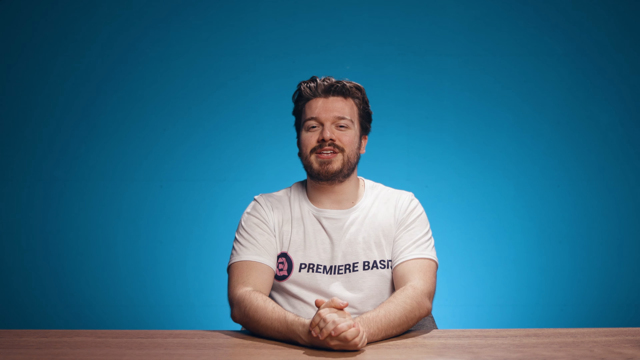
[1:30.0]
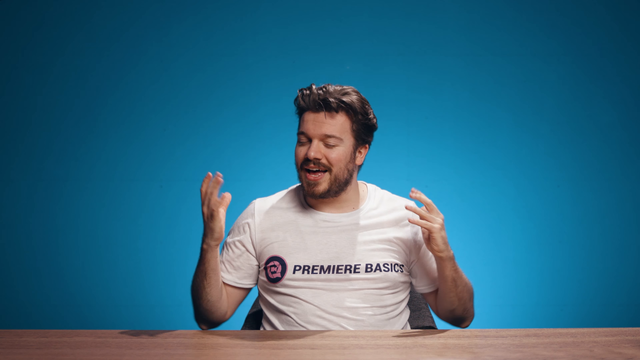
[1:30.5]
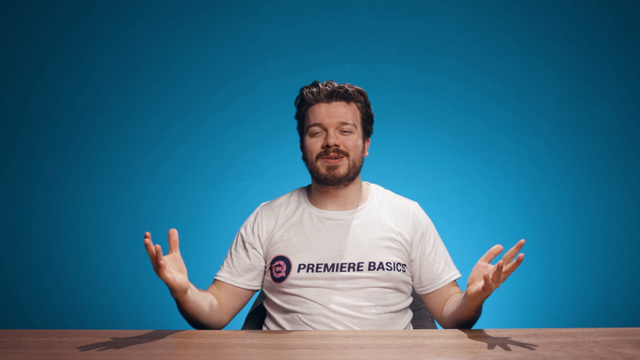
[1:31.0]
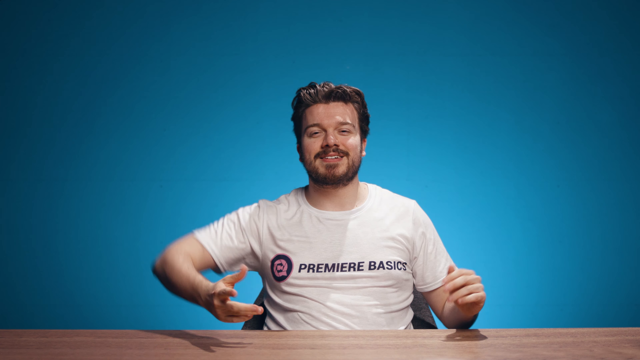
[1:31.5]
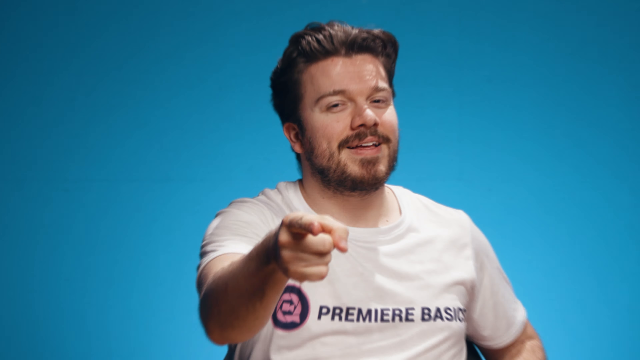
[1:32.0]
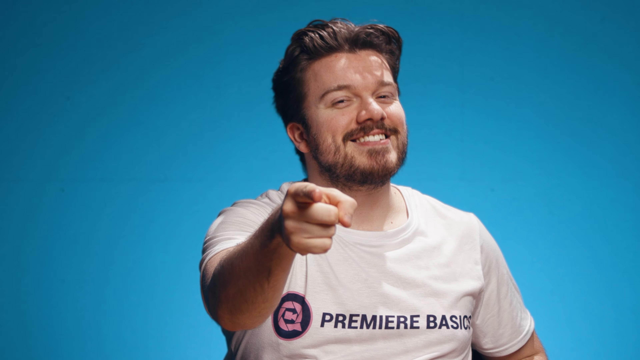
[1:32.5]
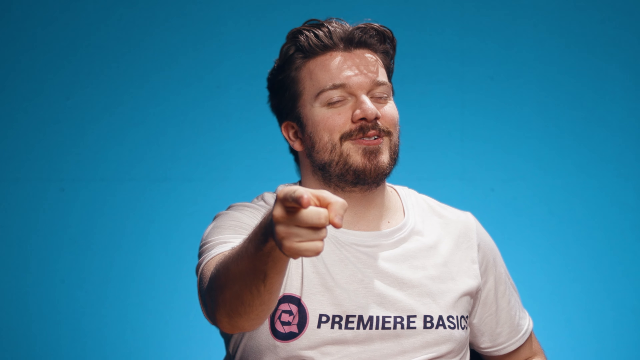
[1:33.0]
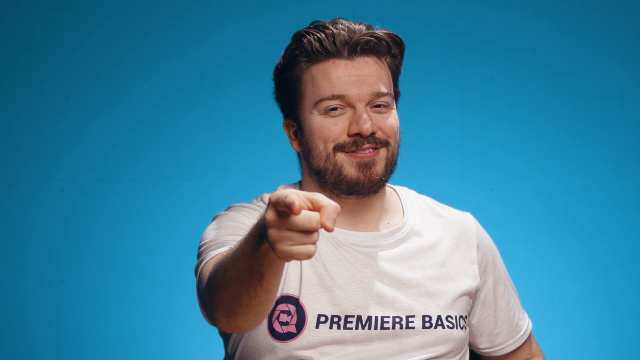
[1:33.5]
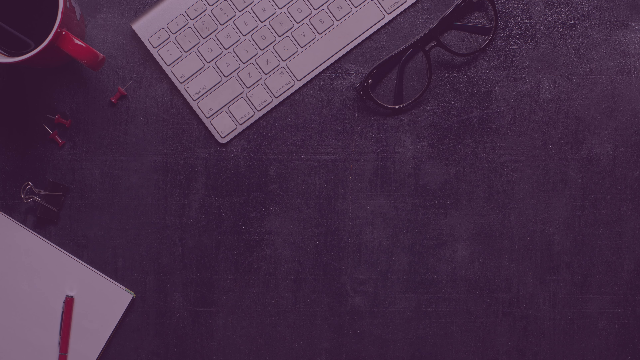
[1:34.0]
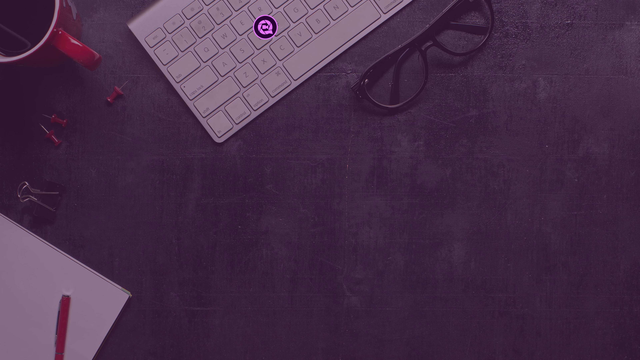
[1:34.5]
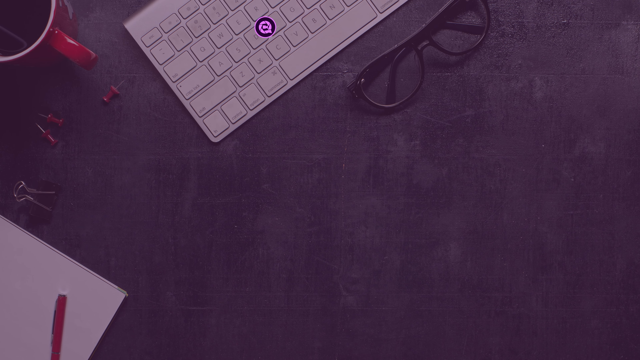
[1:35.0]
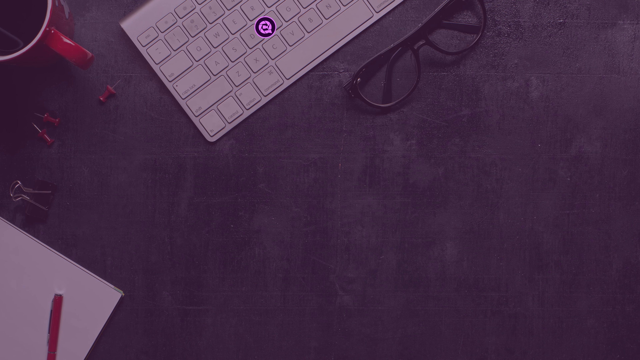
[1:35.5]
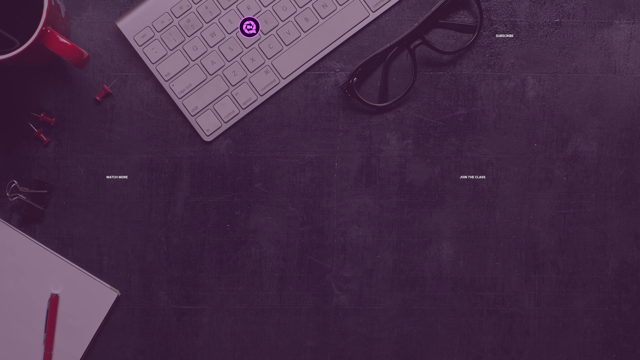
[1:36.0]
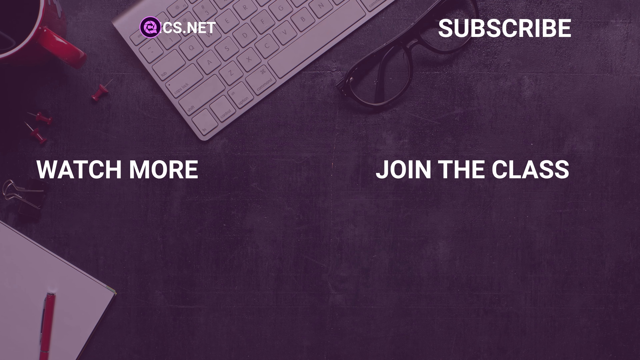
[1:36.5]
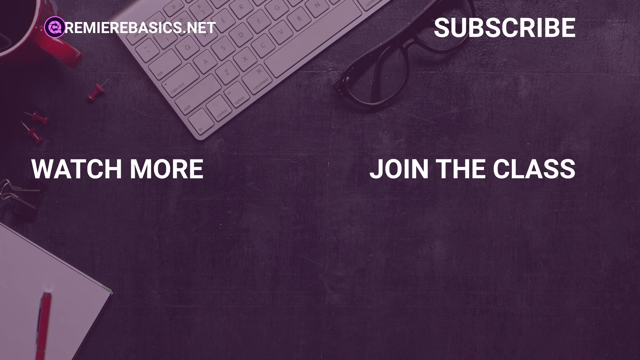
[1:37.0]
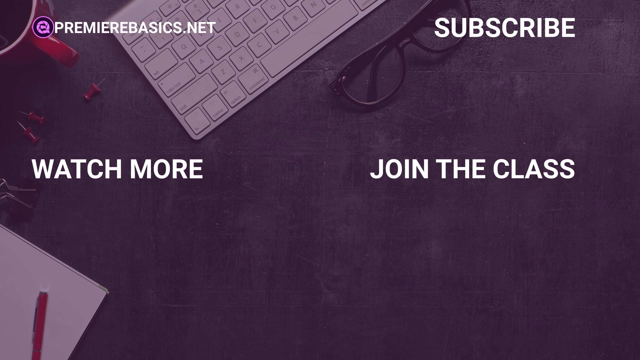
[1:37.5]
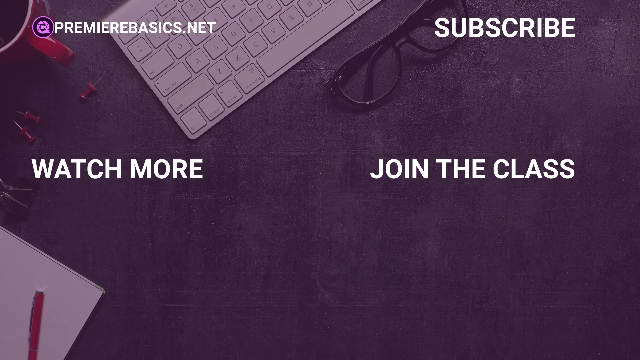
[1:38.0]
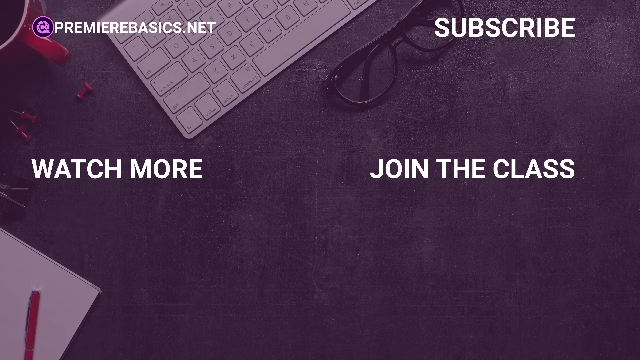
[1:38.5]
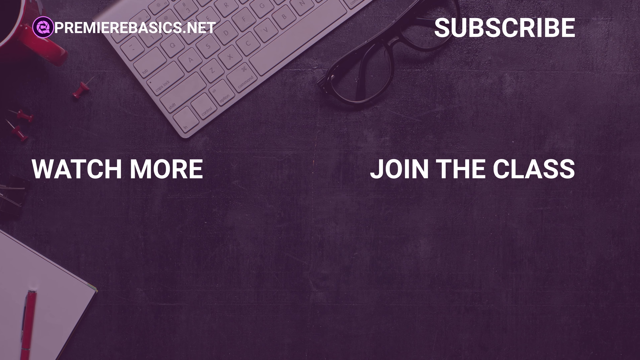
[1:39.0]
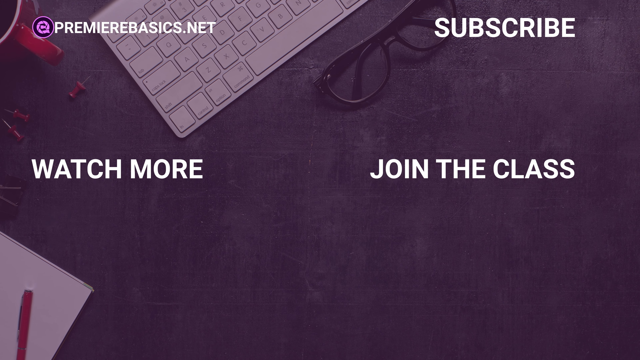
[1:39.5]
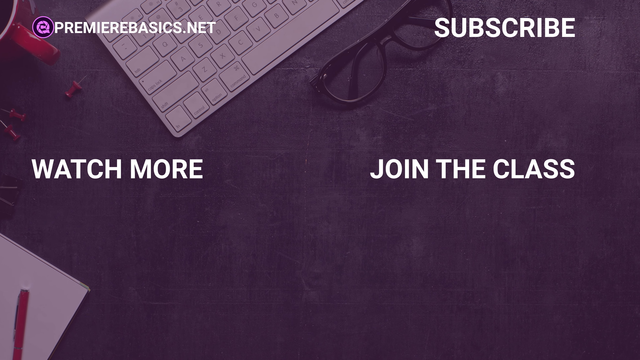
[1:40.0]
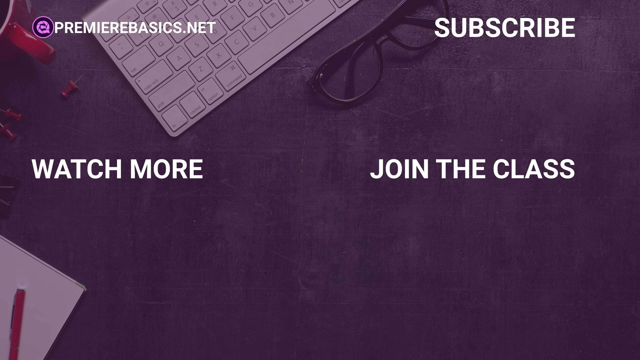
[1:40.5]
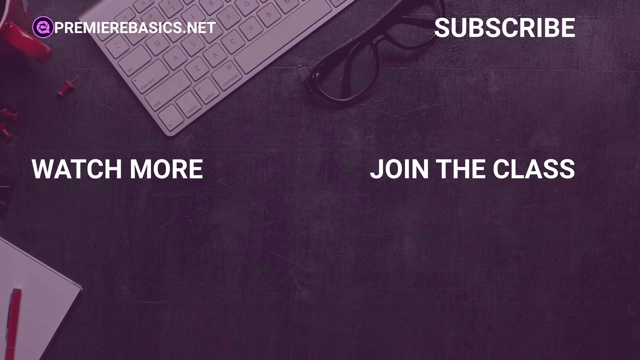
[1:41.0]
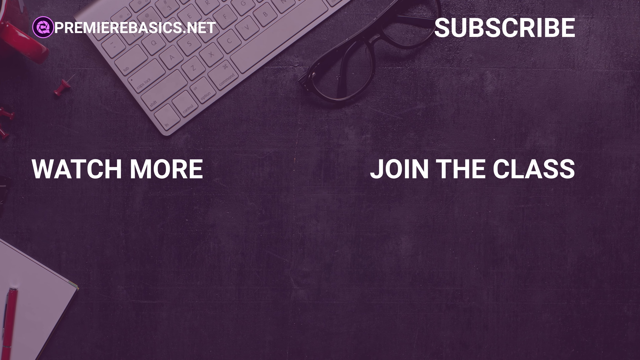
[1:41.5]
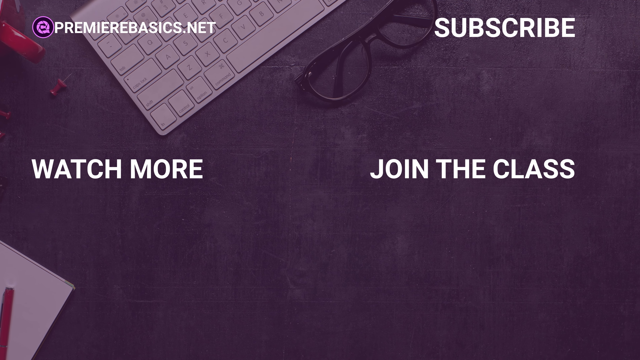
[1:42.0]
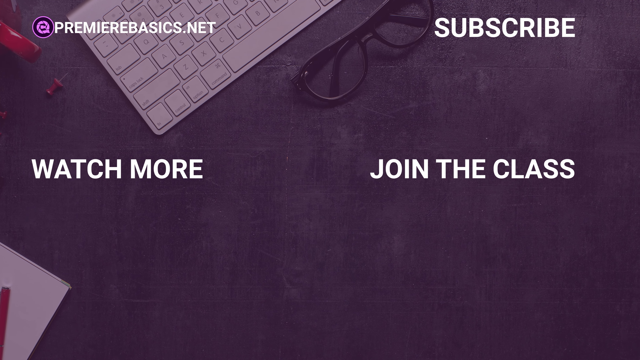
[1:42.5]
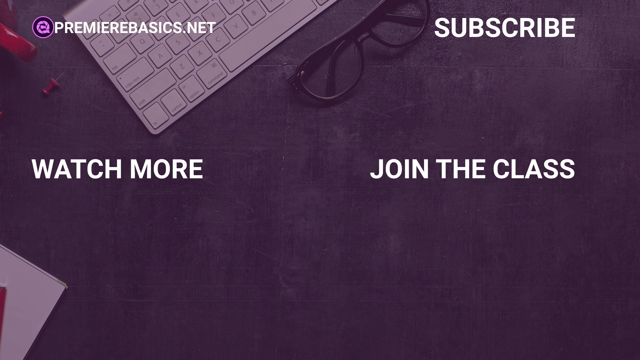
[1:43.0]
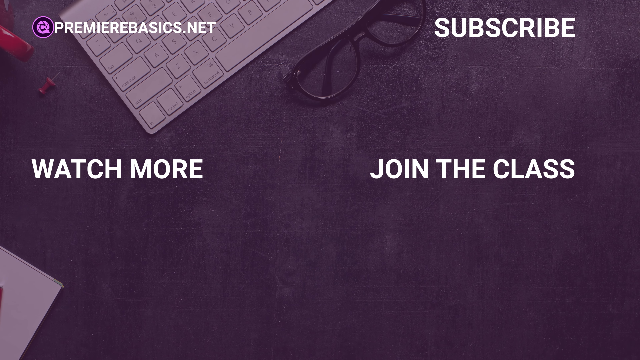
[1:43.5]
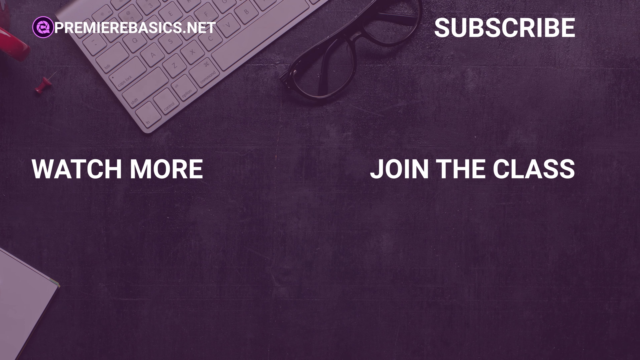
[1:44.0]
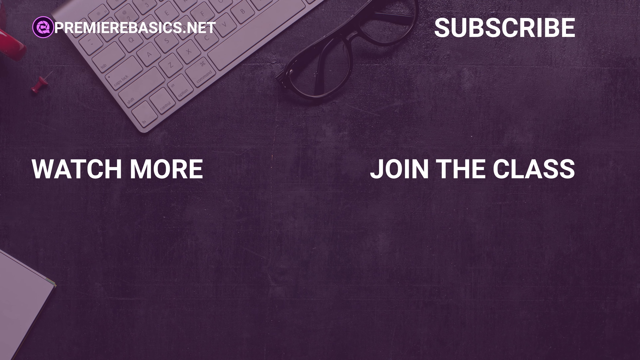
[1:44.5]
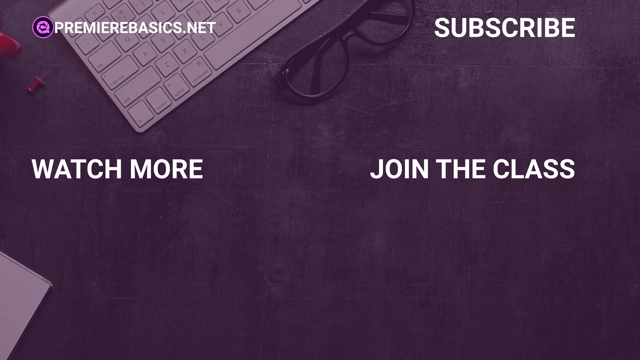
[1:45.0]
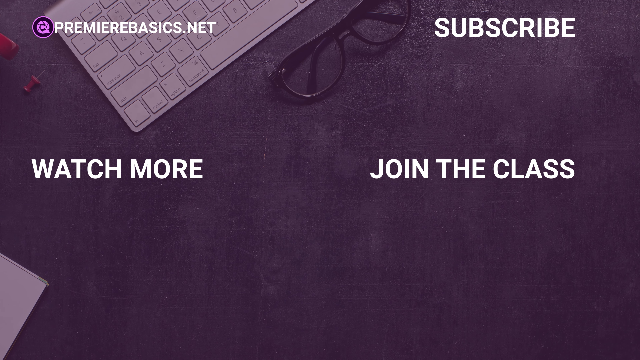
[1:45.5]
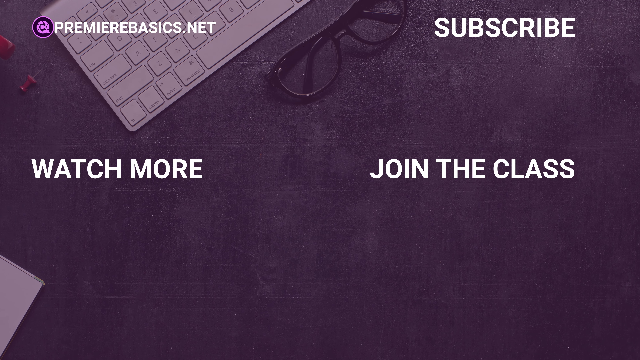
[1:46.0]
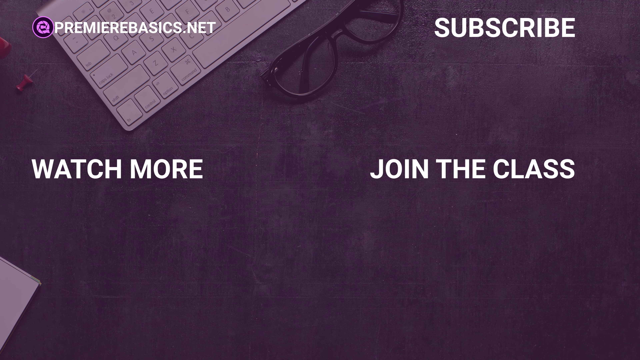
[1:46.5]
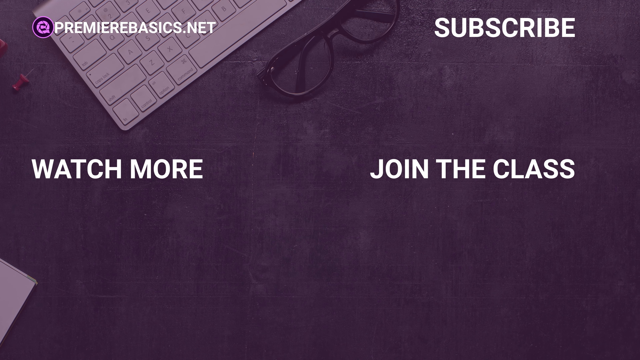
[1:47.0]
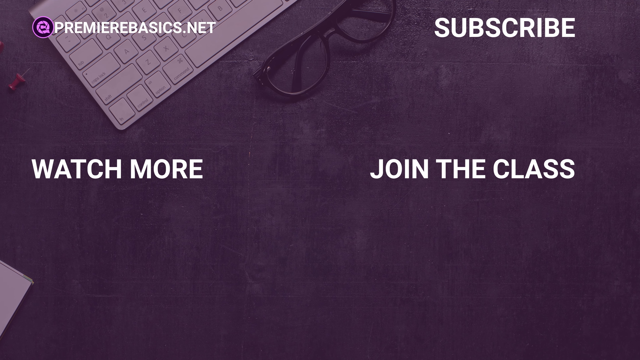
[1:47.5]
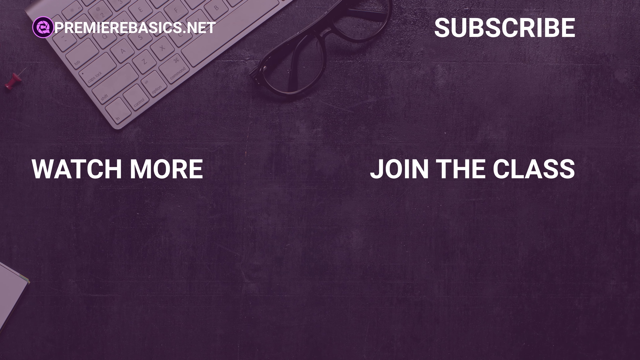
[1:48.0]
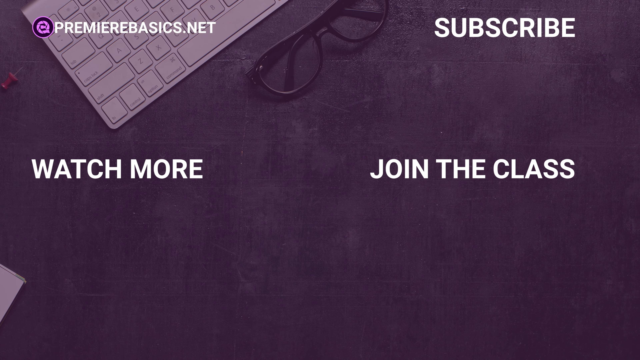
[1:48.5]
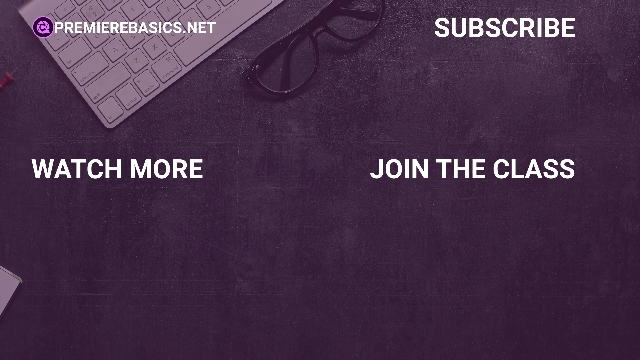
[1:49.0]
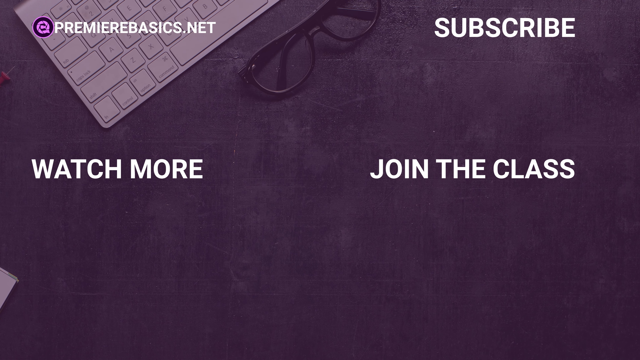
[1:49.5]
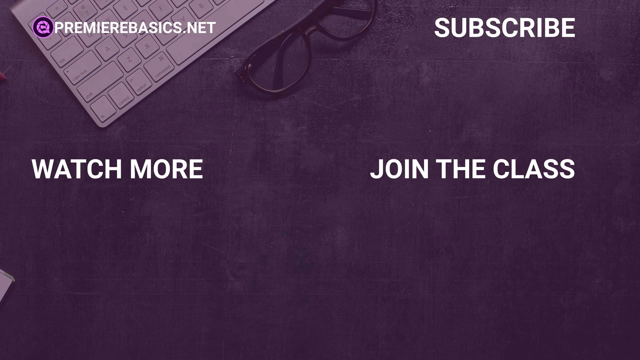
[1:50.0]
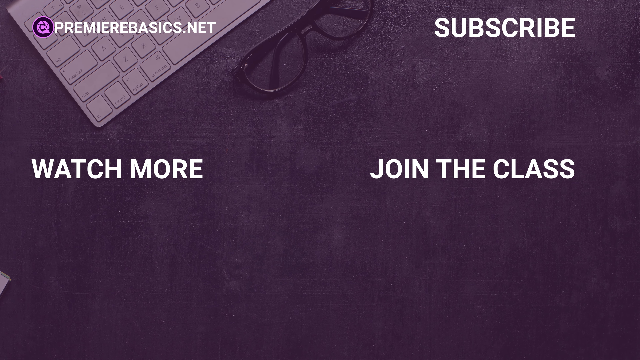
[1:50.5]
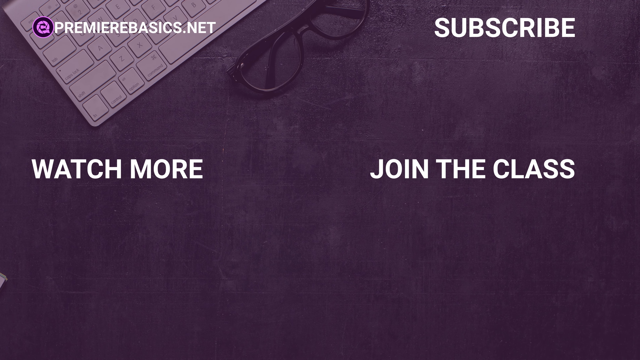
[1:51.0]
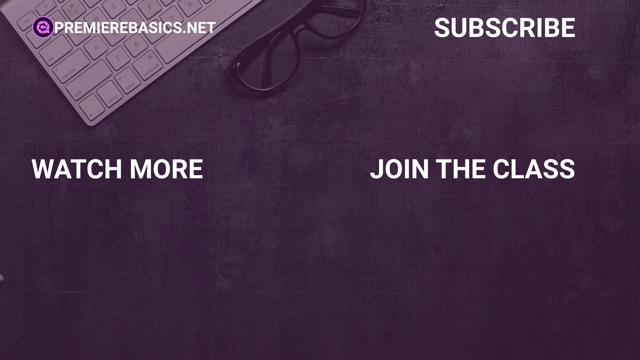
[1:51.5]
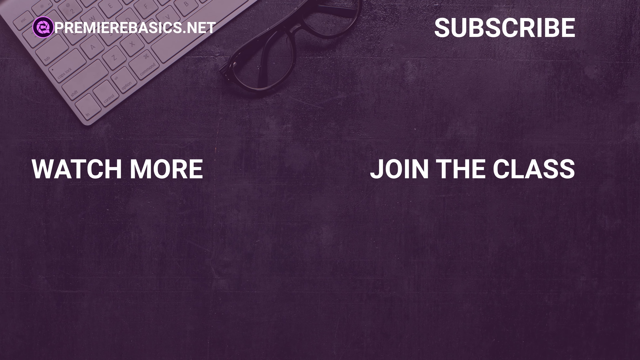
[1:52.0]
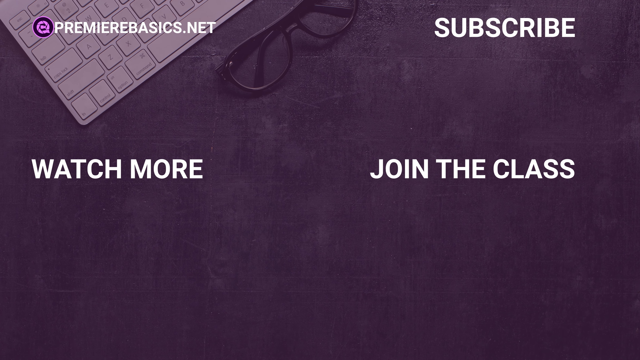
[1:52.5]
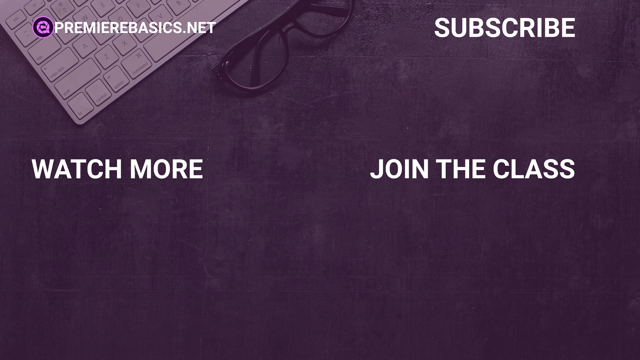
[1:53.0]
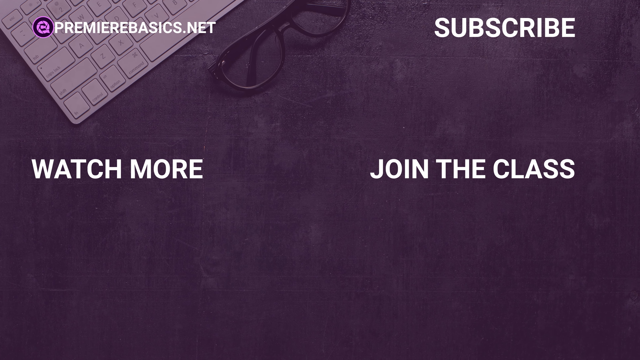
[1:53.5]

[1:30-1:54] A laptop, a pen, a flyer and sunglasses are shown. The presenter, a man in a white t-shirt, introduces himself and seems to be showing something on the PC. The PC screen has blue and white writing on a black background, and the buttons to press on the PC keyboard are shown. A man then enters his black car. The presenter appears again on the screen, and his page appears, showing that he follows 15 people and has more than 30,000 followers. There is a profile picture, and a man on the side shows what the person has been posting.